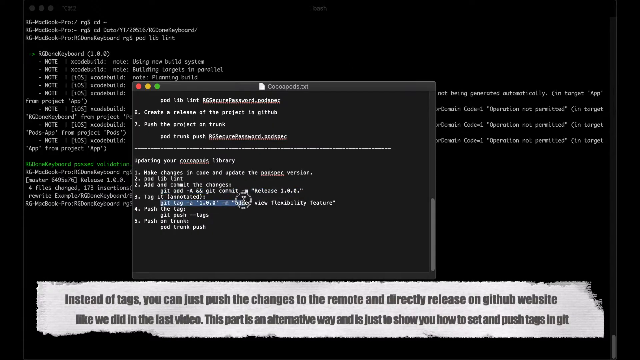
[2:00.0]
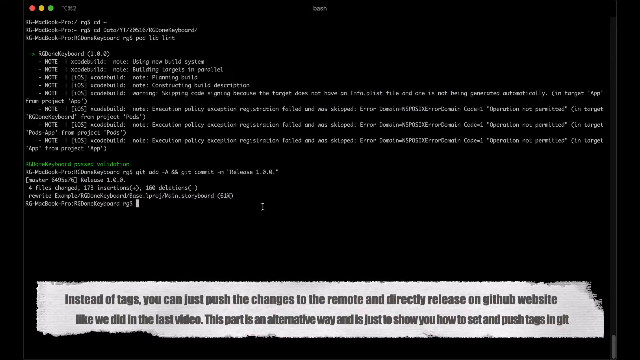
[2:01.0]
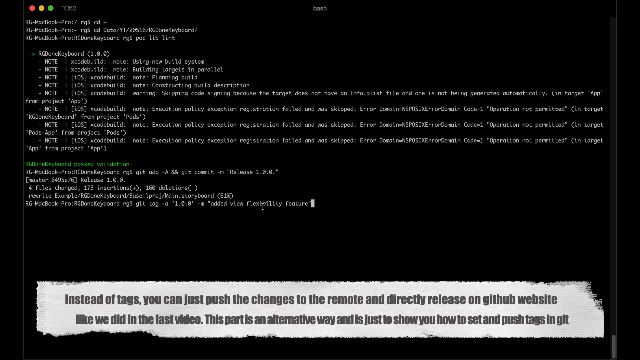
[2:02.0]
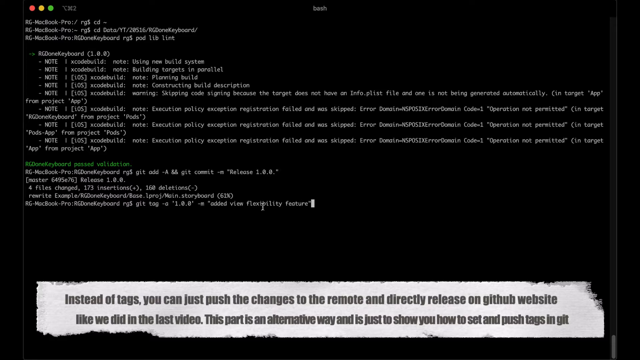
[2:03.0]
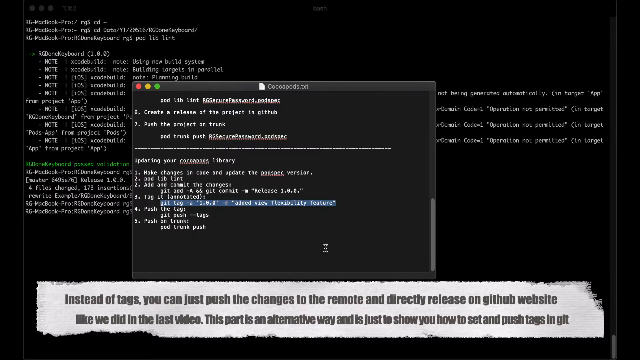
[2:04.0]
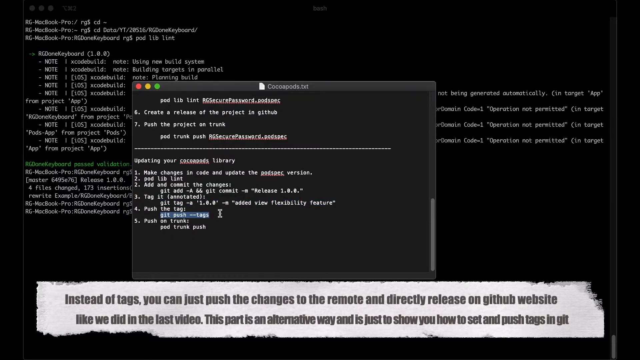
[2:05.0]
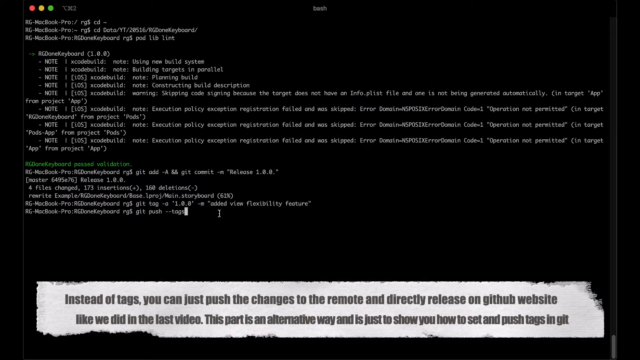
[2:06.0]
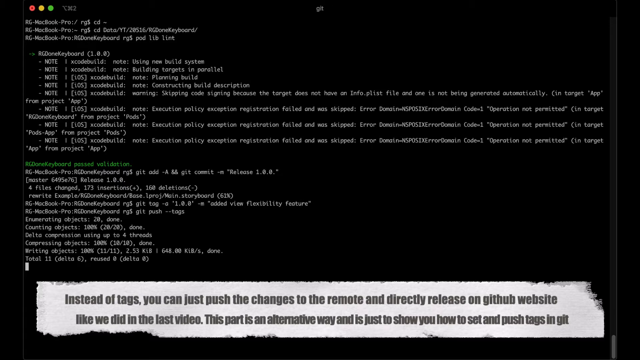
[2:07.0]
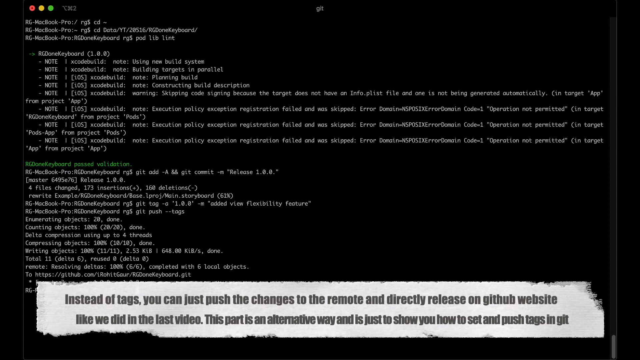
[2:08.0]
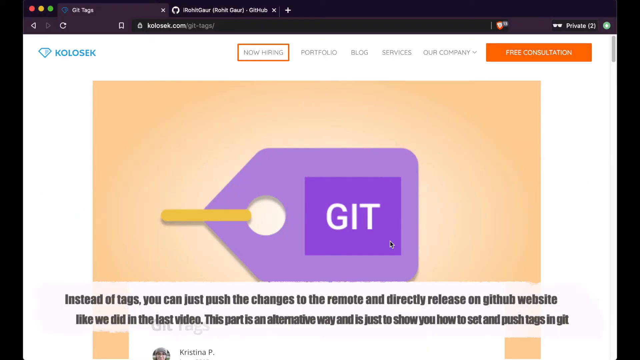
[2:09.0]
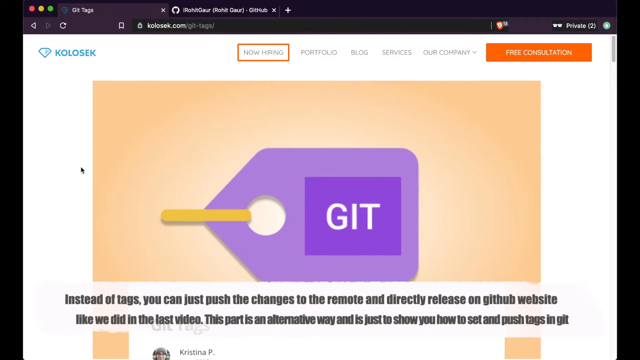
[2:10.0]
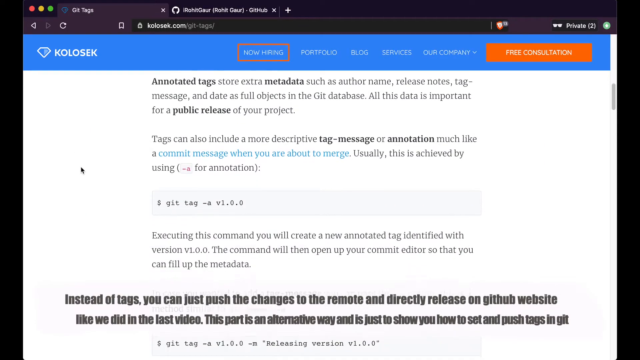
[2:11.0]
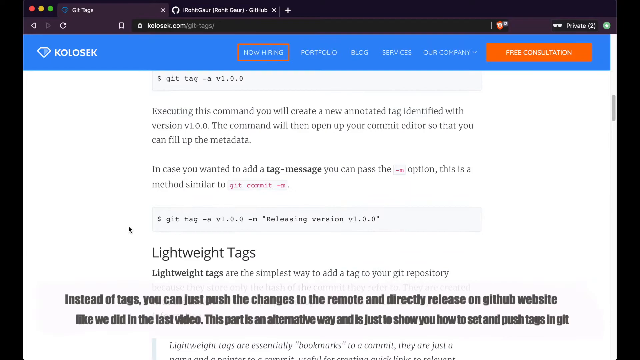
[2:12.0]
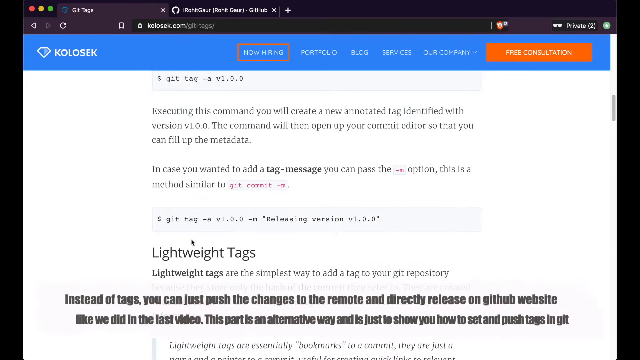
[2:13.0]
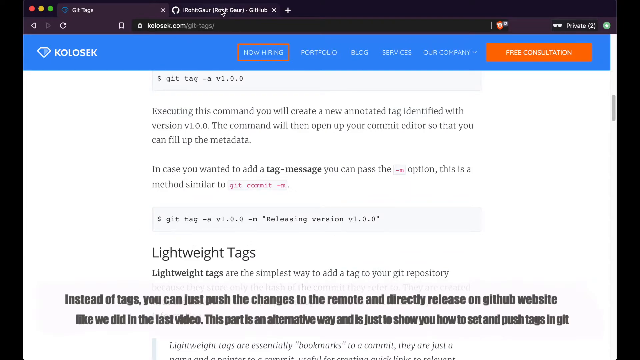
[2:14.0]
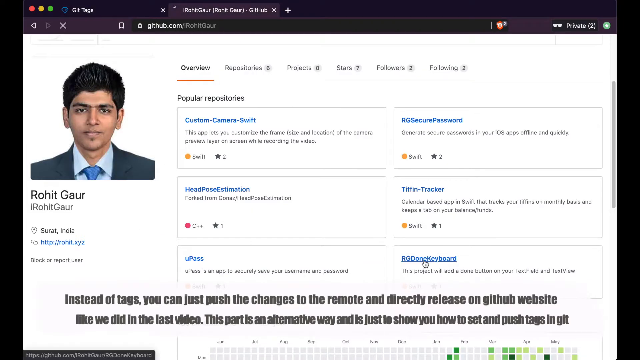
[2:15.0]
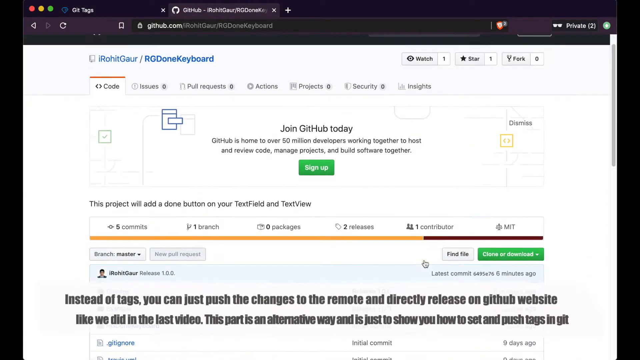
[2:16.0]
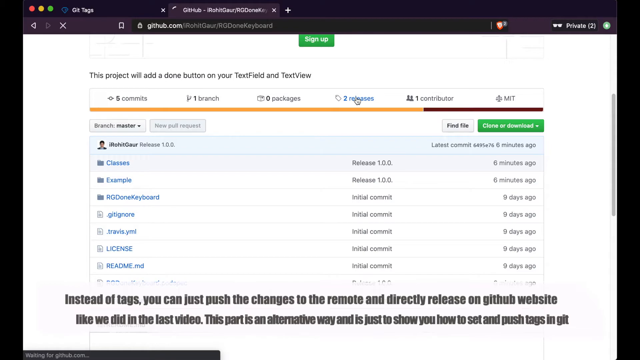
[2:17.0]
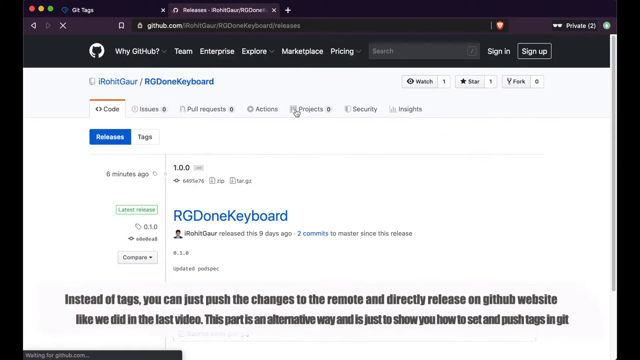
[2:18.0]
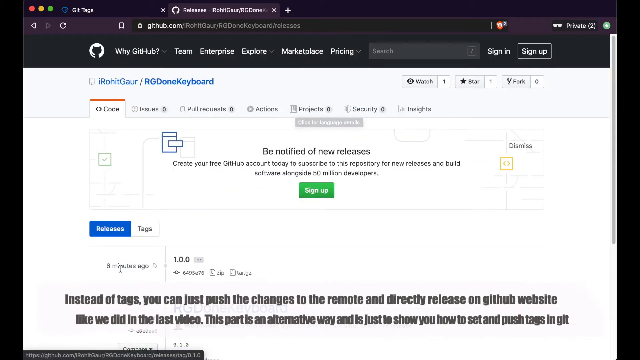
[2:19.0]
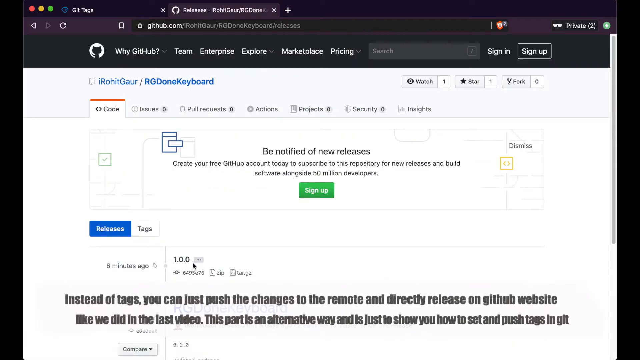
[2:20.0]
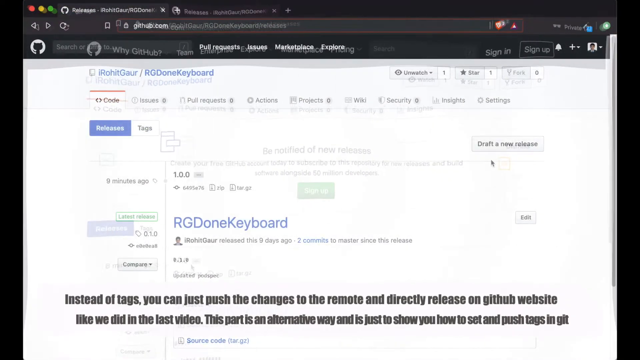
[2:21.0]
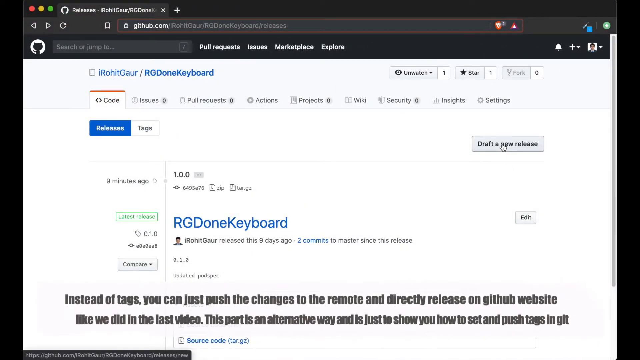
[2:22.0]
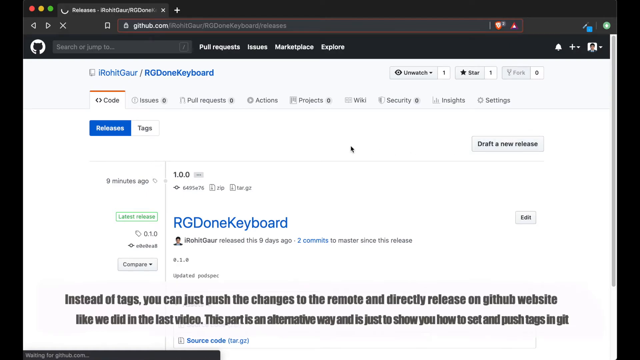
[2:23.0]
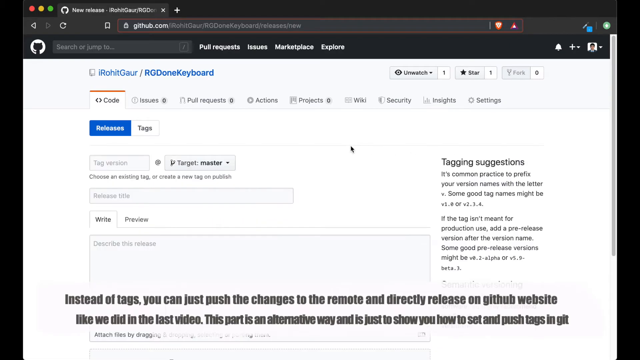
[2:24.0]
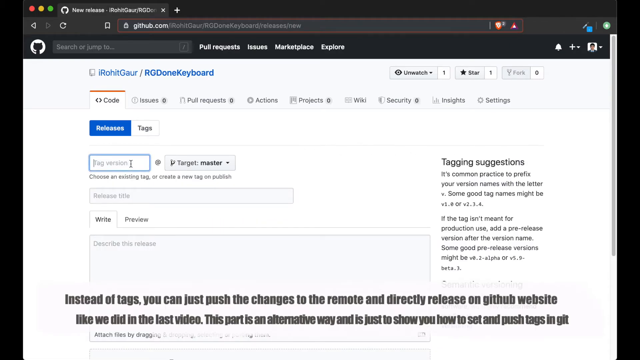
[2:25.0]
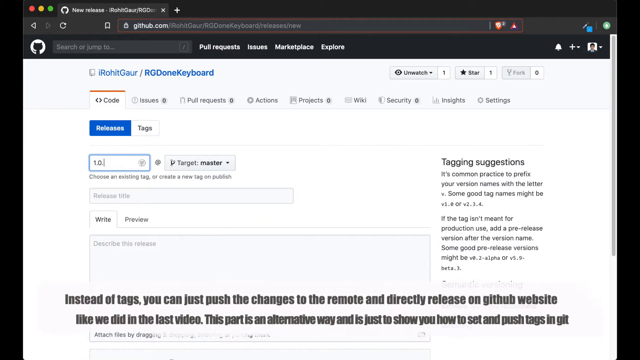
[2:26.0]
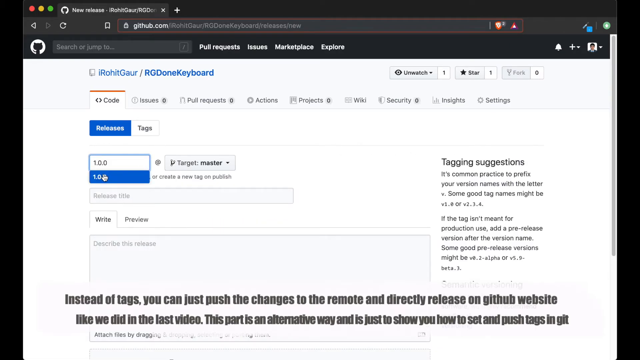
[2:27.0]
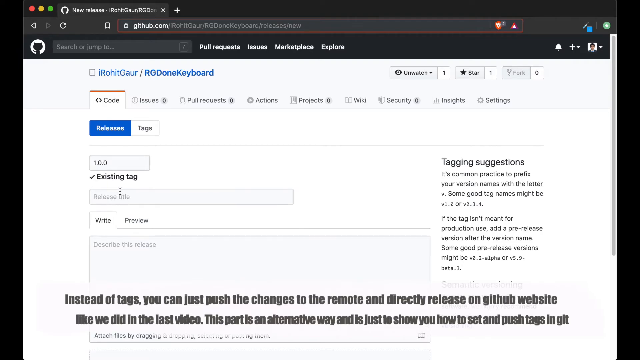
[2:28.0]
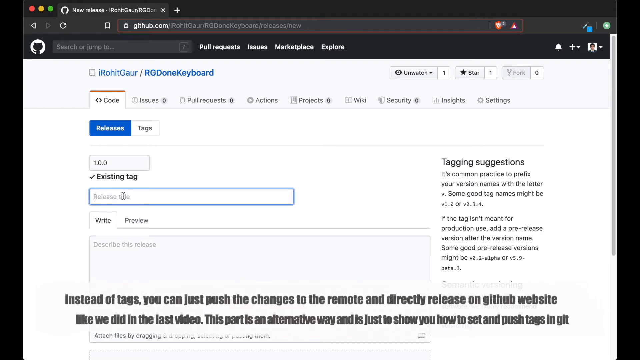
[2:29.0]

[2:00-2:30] A text box briefly appears on the page as some text is selected, and then the command prompt page returns. At the bottom of the screen is a white box of text that reads "instead of tags you can just push the changes to the remote and directly release on github website like we did in the last video. This part is an alternative way and is just to show you how to set and push tags in git." Some code appears on the screen while this message is up. The text box appears and some typing goes on. The next page looks like a web browser, with "git tags" at the top. The page is white, and in the center is a light orange box with a purple git tag on it. The cursor scrolls down the page, which has some information about tags. The cursor moves to a different page of the web browser, which brings up user details for someone called Rohit Gawar. The cursor scrolls down to a list of downloadable items. Text reads "this project will add a done button to your text field and text view". The cursor clicks around and selects the options to draft a new release, and types an existing tag into a box.